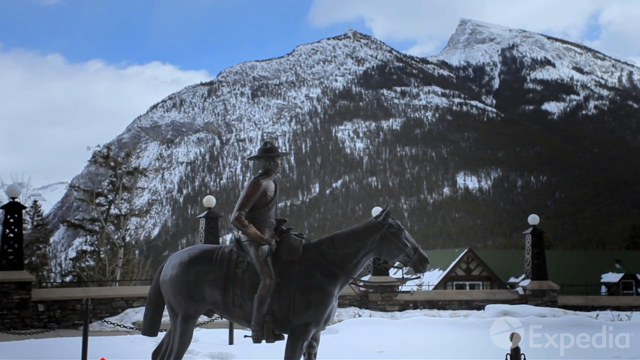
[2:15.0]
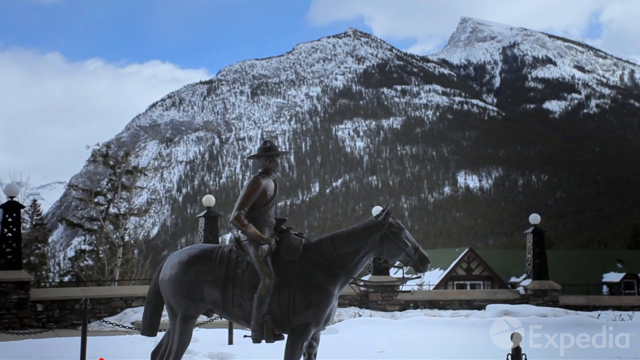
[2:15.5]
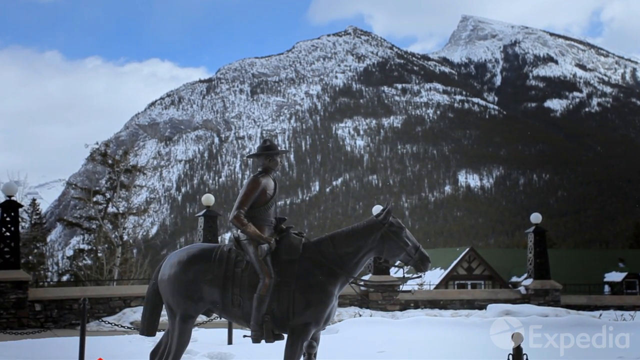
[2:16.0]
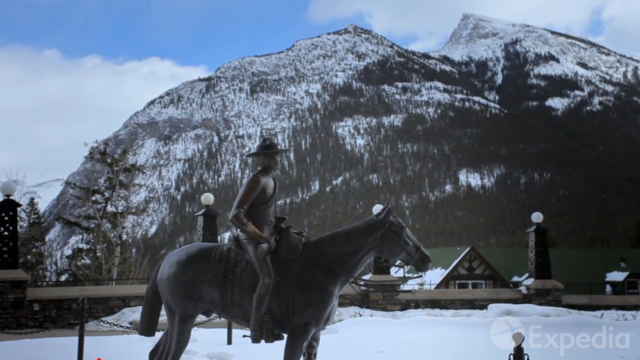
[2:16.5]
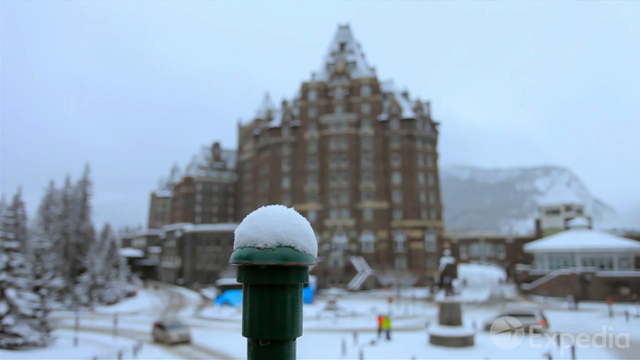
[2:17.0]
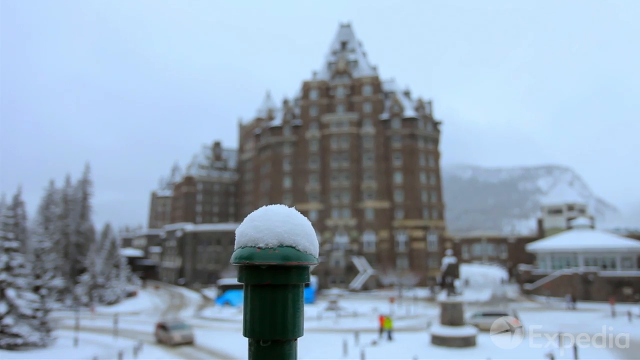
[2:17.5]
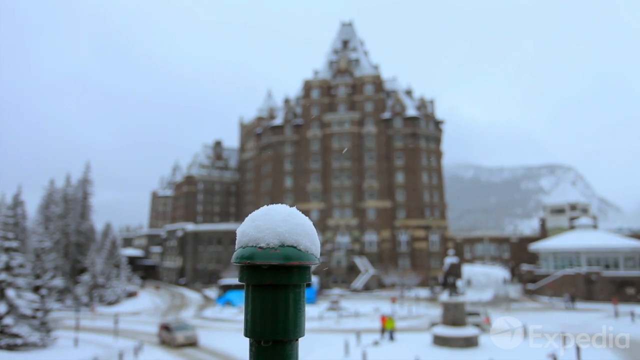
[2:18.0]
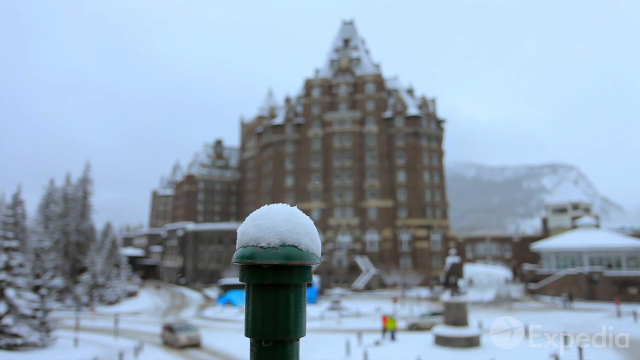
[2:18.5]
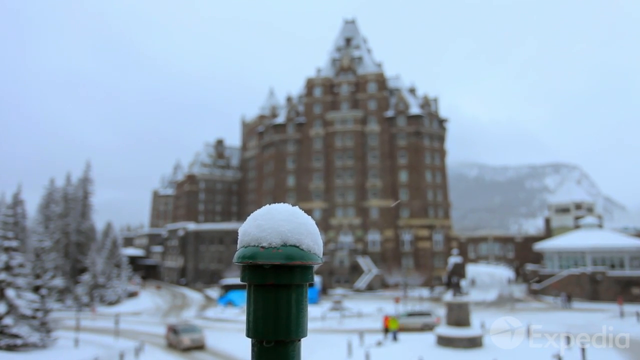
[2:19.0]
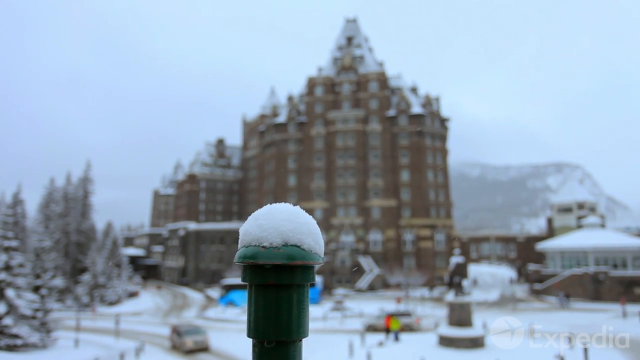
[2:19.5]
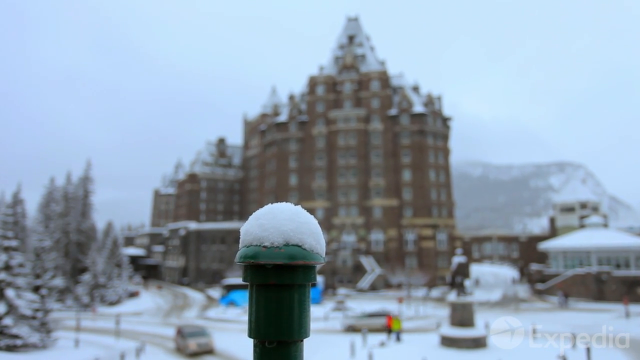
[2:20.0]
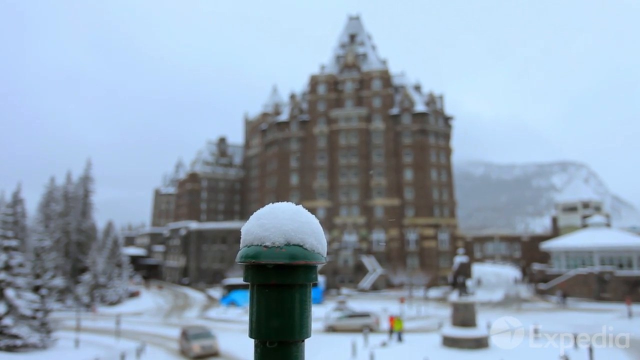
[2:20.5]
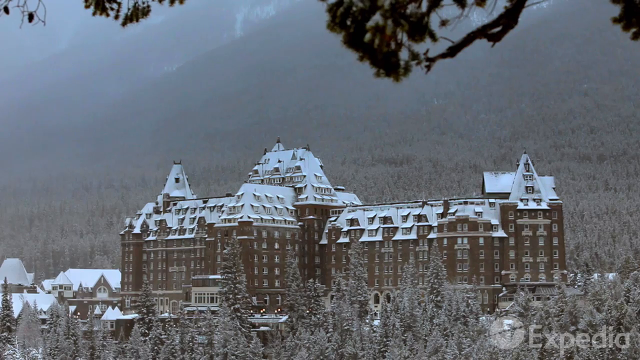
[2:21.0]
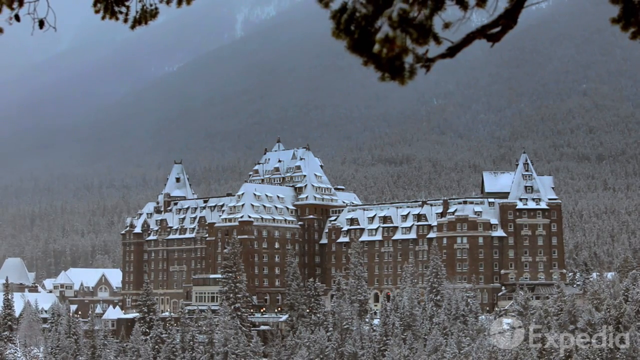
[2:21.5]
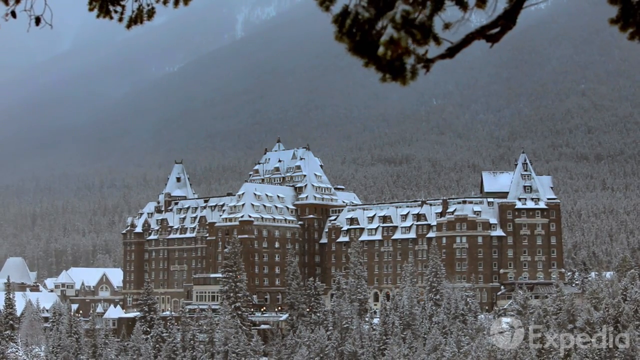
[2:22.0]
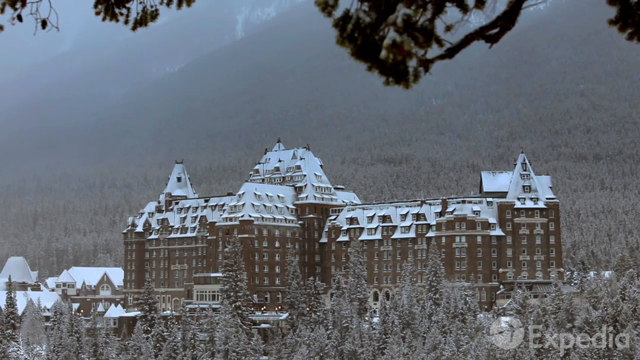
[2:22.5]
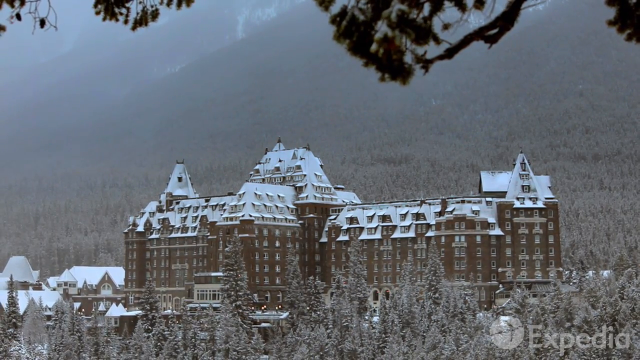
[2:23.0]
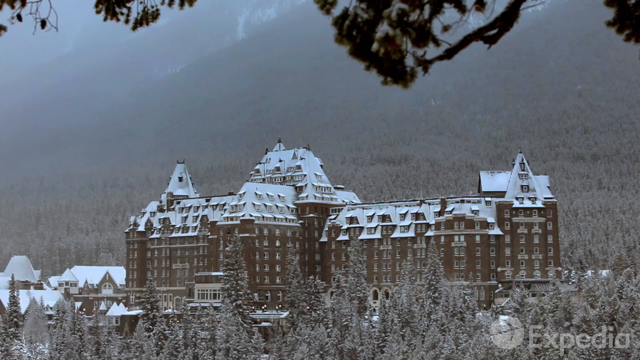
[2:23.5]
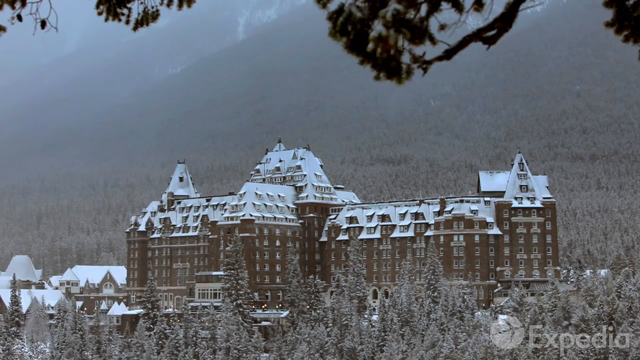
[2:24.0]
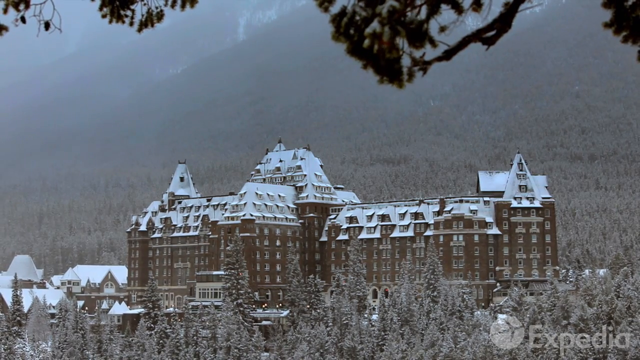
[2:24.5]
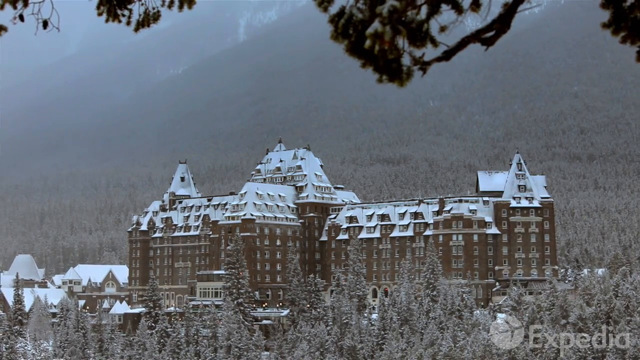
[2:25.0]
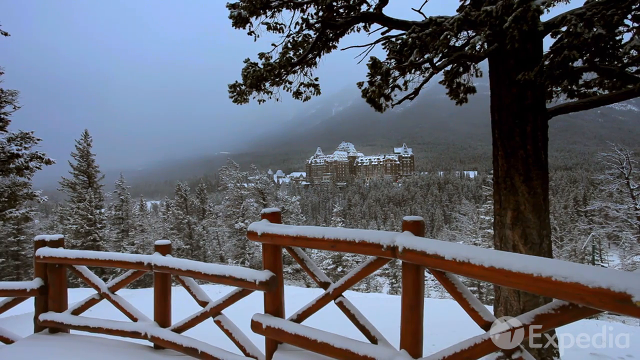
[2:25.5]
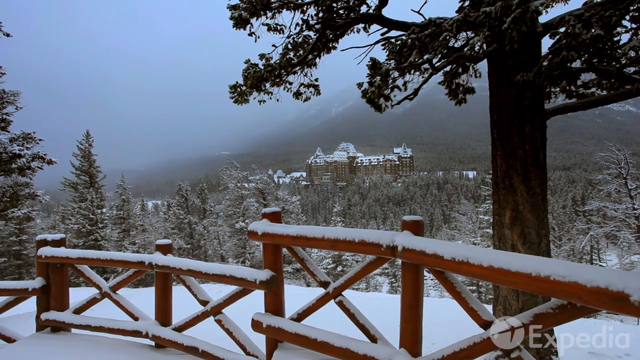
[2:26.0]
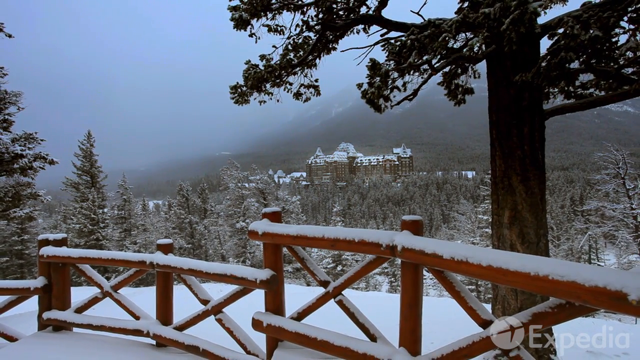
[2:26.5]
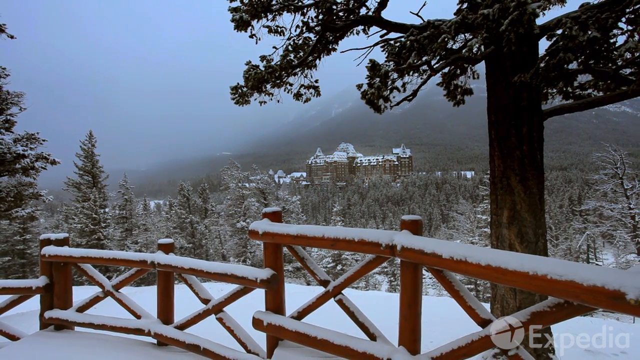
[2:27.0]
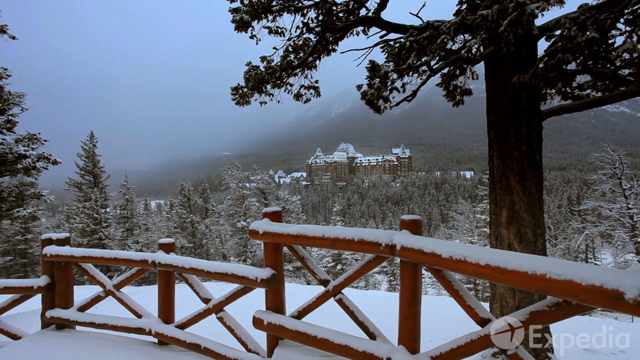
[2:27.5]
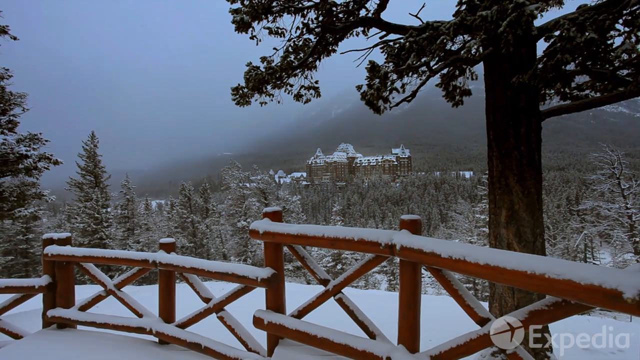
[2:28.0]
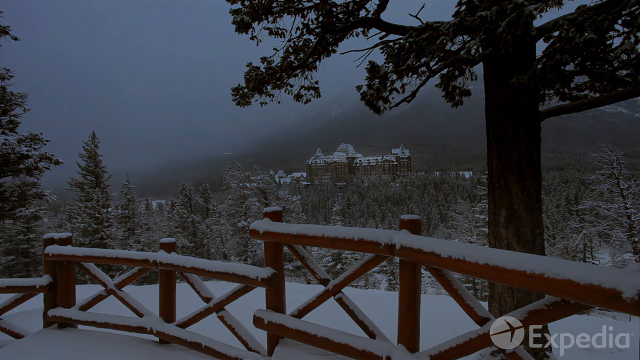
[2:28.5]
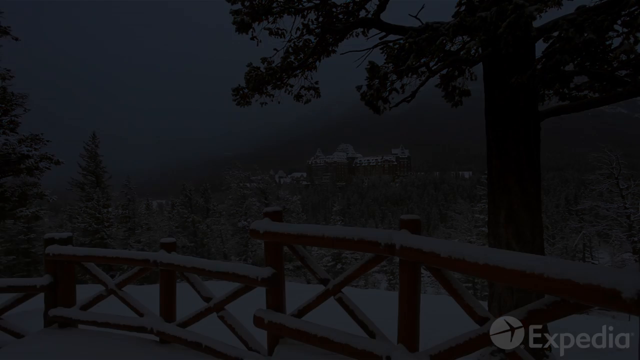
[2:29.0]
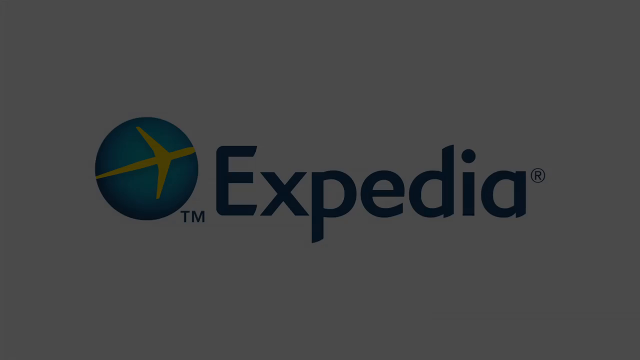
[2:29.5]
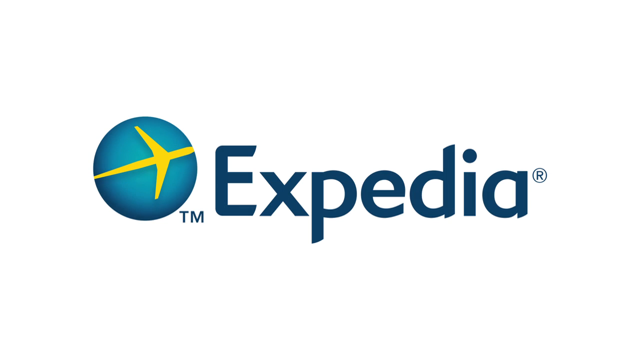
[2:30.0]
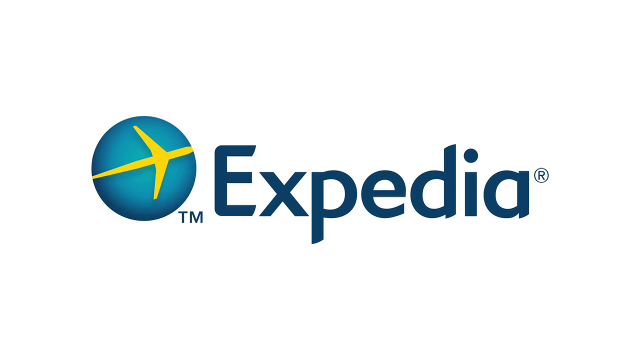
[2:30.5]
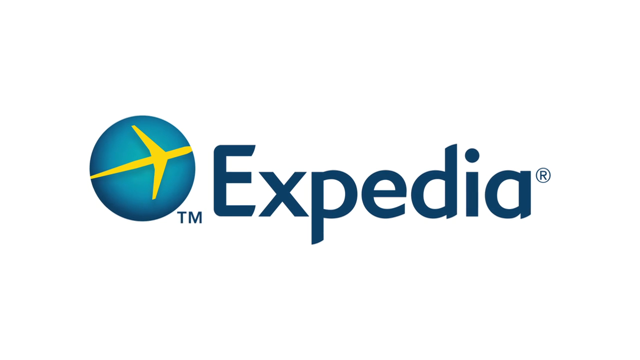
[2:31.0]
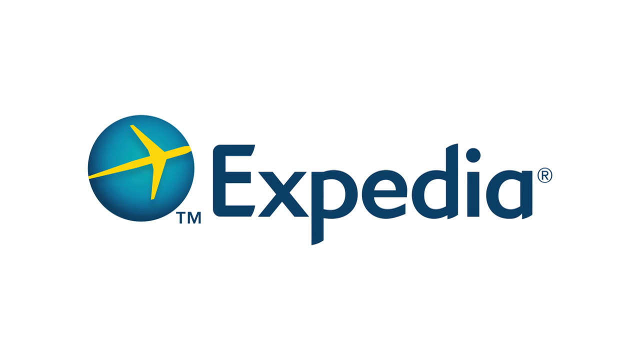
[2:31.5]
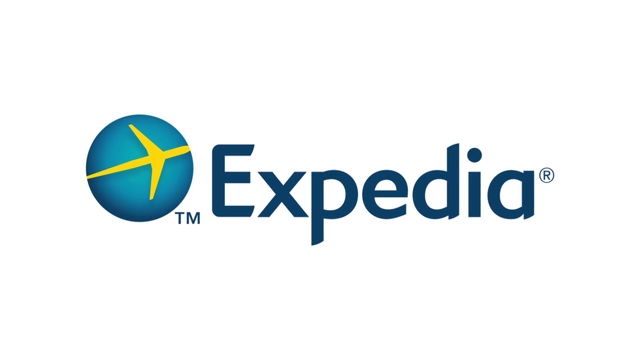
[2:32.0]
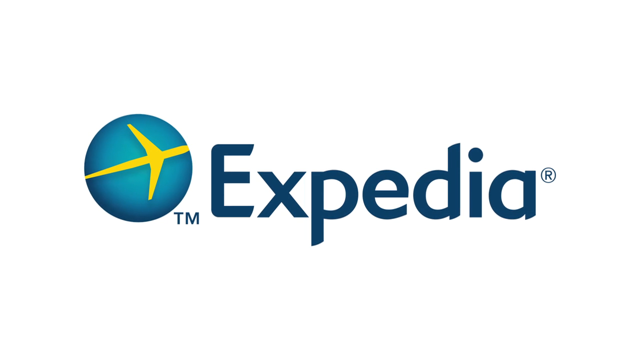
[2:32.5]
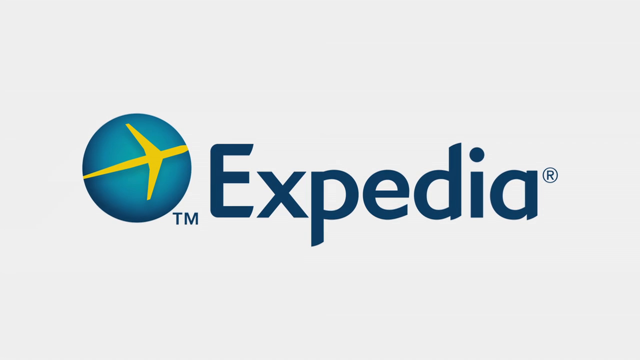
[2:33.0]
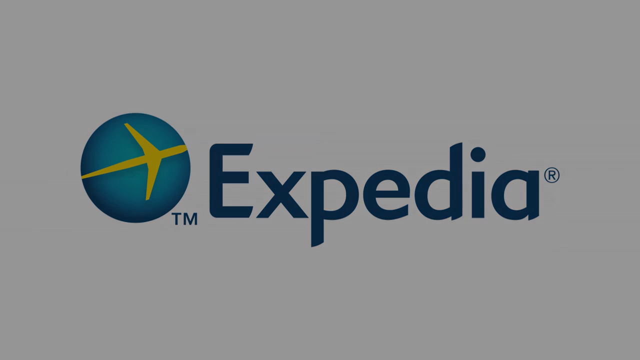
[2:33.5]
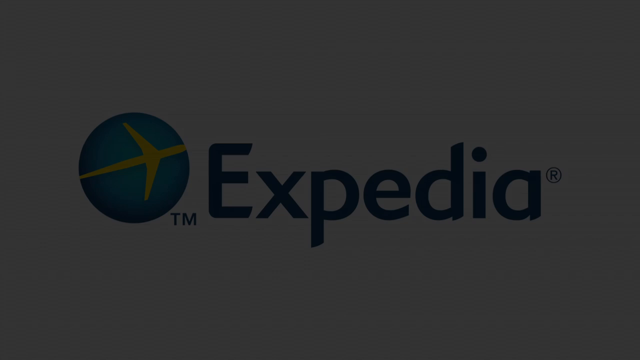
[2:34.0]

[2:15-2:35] The sculpture of the man sitting on the horse is in the foreground, and in the background there is a very large mountain covered in snow and trees. Next, a green post with fresh snow is in the foreground with the large building in the background; it is snowing and very gray. In the next scene, the very large building is collecting snow on the roof, and it is hazy in the background. The next view is further away from the building, showing much more foreground full of trees, nature and fresh snow piling up on the fence, before it fades out to a black background.